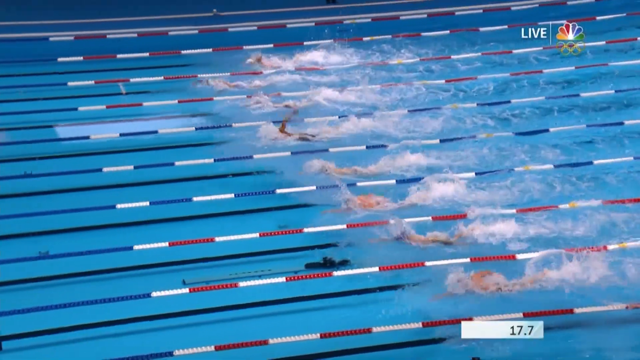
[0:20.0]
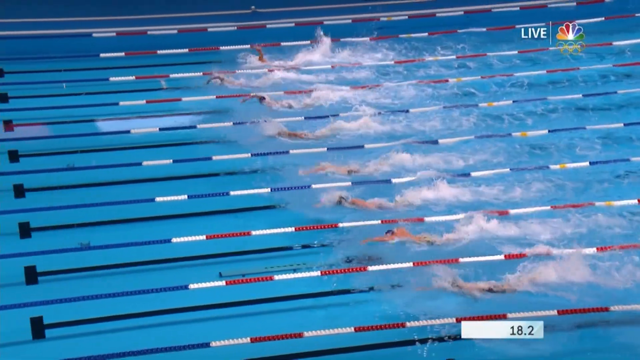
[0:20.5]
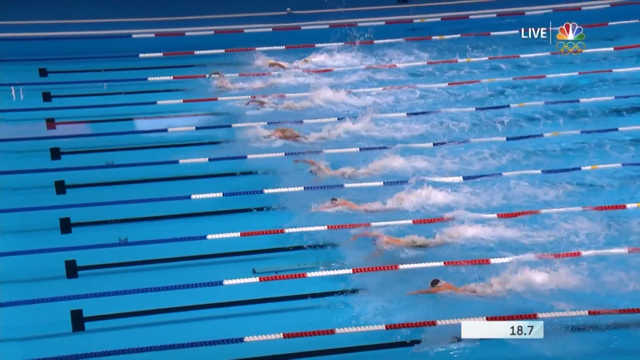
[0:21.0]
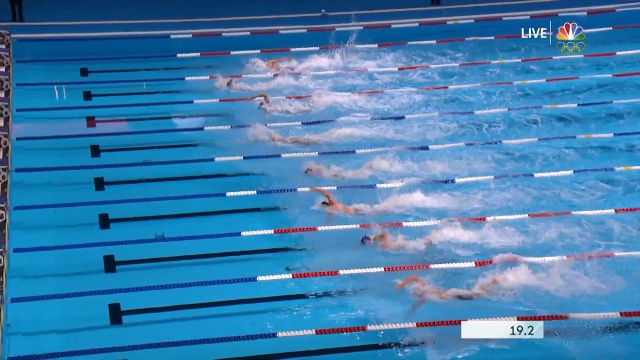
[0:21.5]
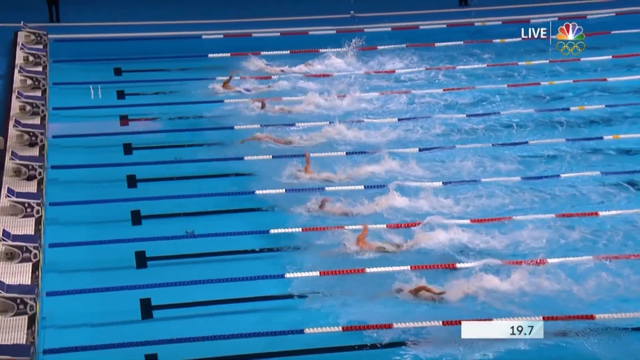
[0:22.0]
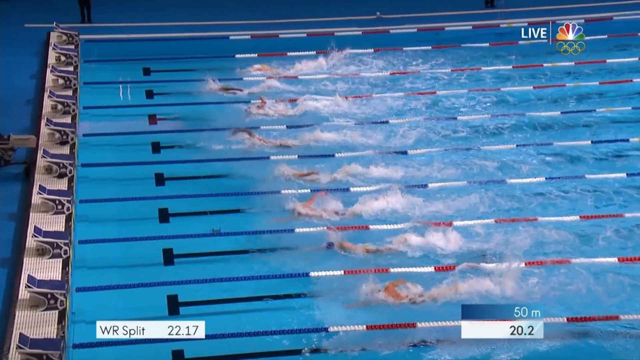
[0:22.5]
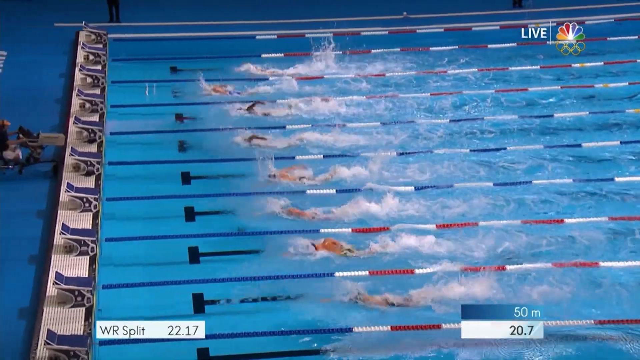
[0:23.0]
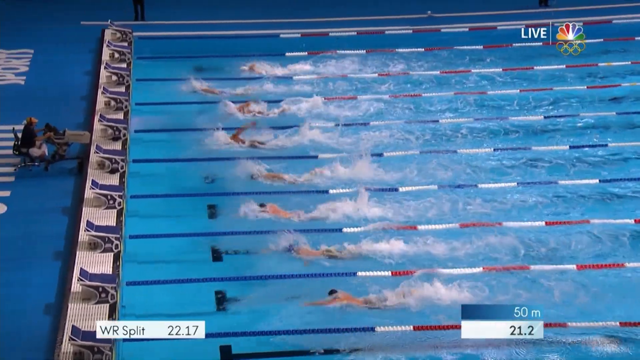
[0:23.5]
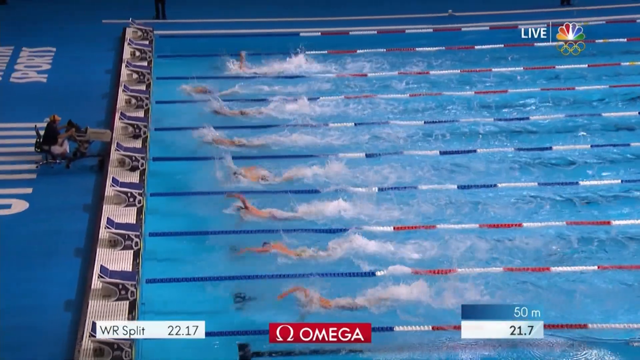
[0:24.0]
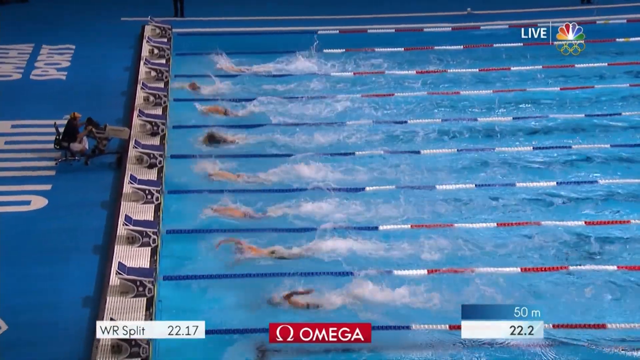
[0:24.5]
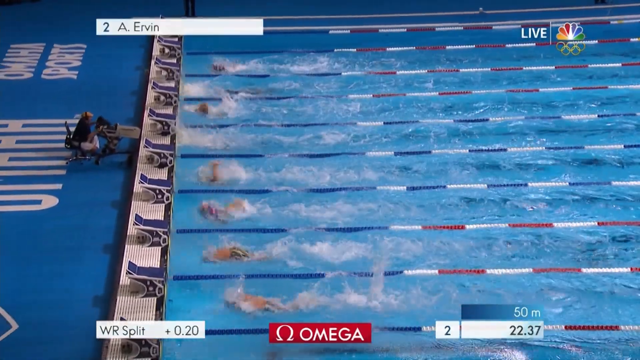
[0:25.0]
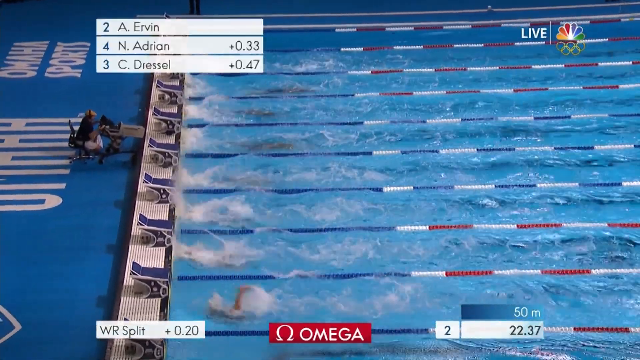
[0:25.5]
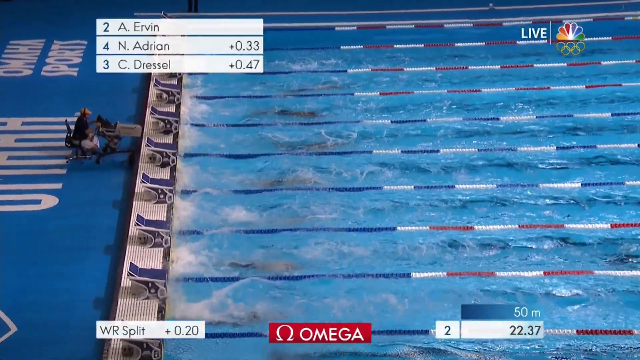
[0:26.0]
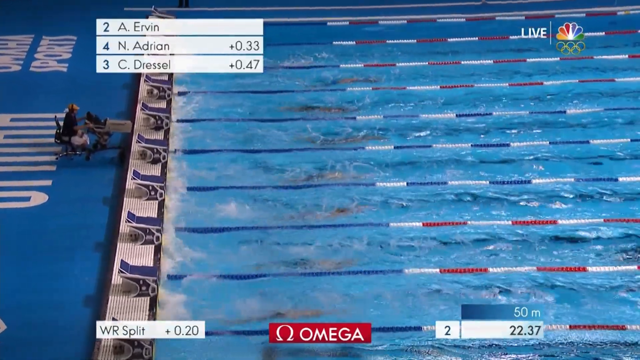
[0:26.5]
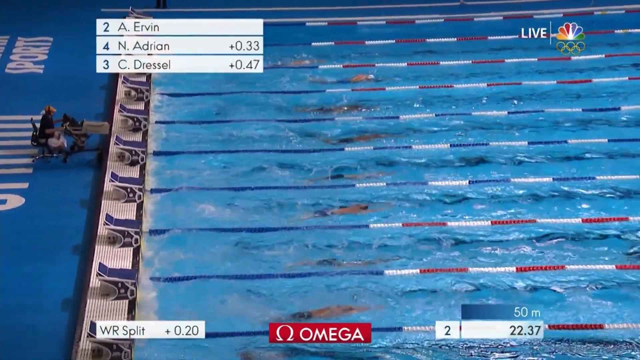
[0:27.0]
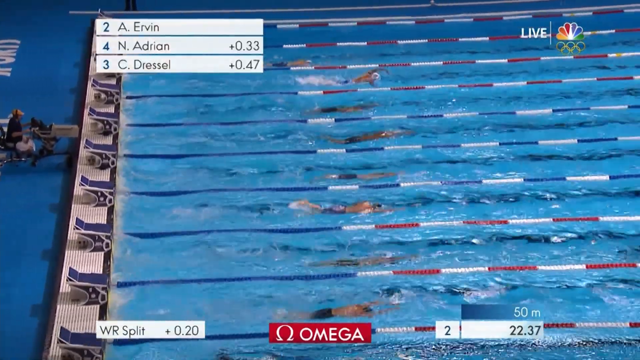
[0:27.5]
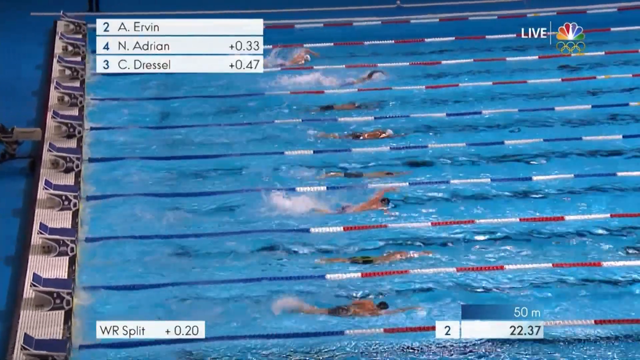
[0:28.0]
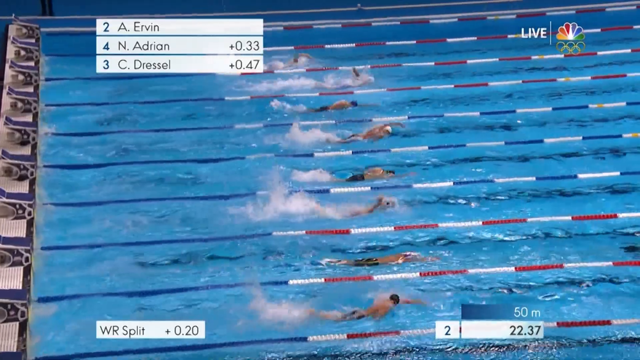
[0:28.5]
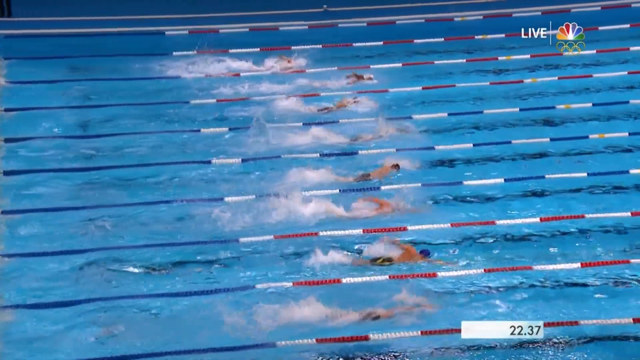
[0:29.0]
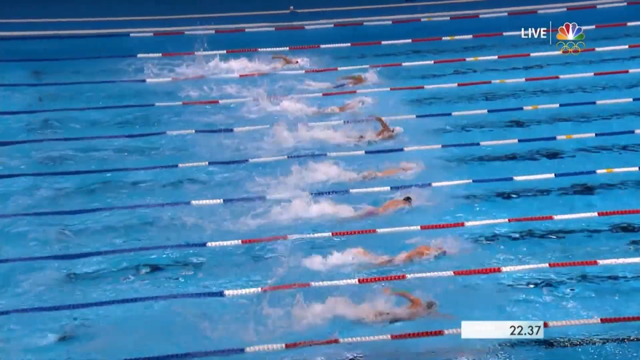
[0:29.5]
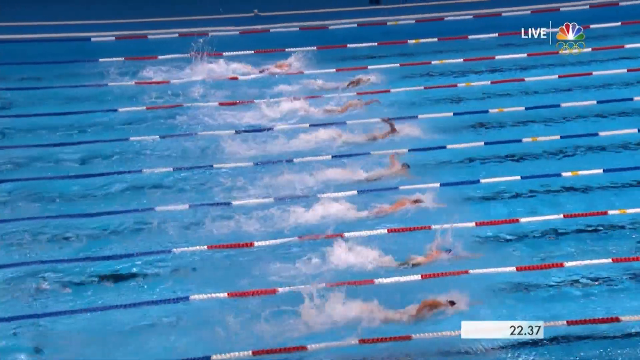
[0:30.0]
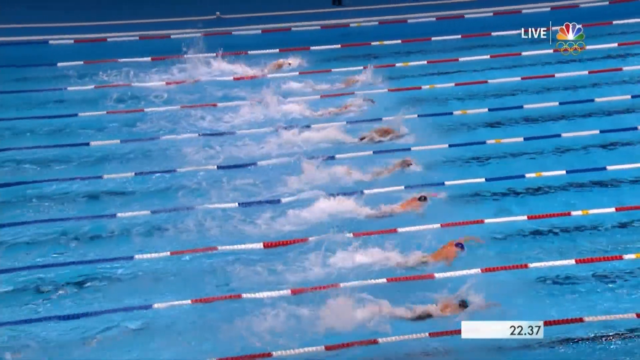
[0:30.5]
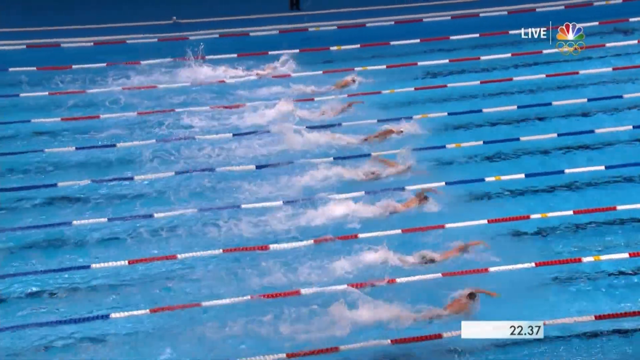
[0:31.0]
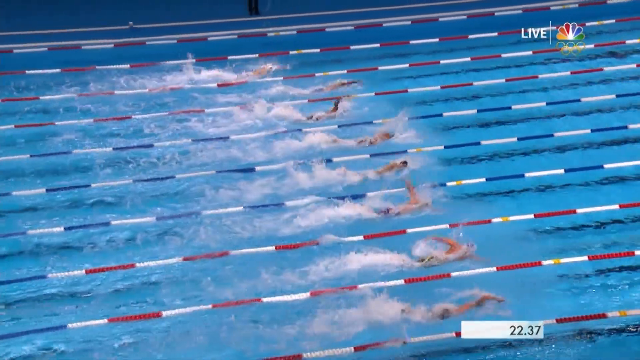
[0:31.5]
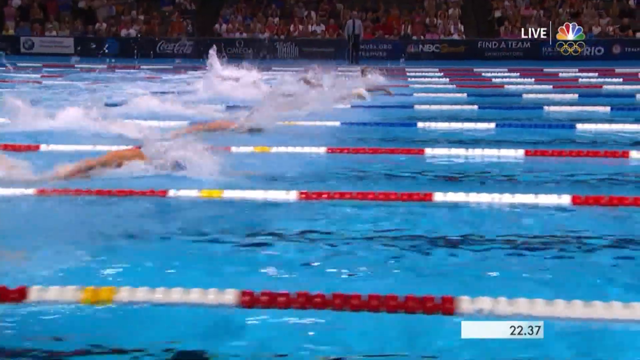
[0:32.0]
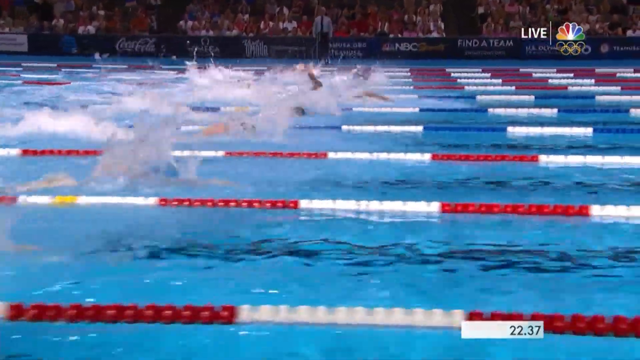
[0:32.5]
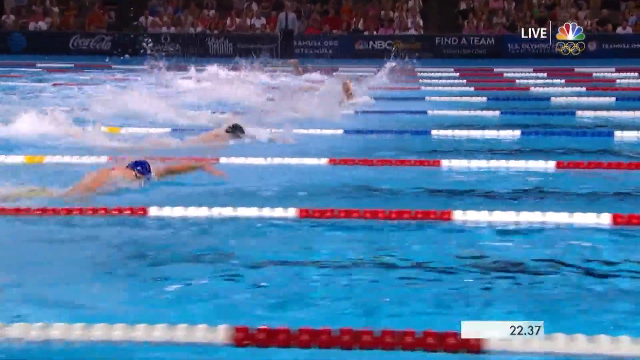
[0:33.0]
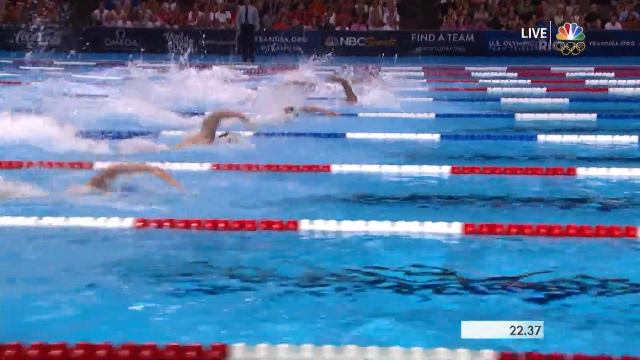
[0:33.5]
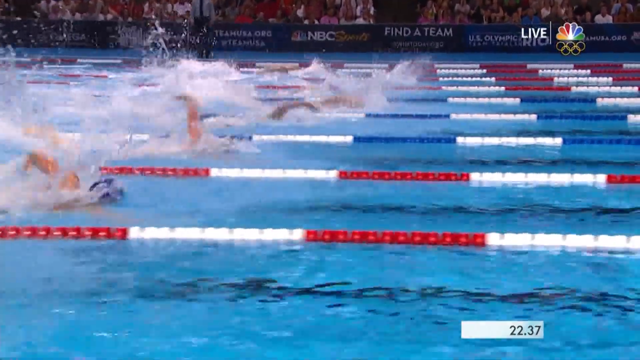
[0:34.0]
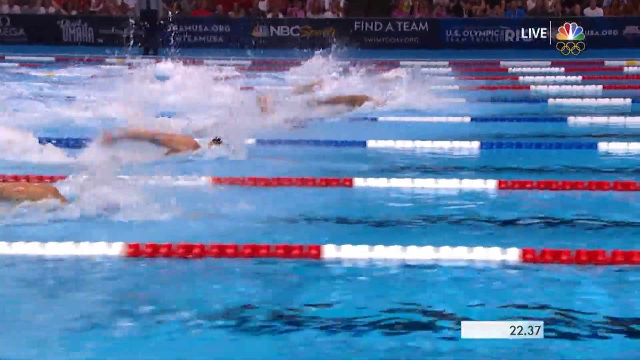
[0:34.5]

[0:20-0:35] The swimmers approach the other end of the pool, where what looks like some kind of set marks in blue appear for each lane. A cameraman sits in a chair, controlling a camera that views the swimmers from the front. In the lower left corner of the screen is written "WR split 22.17", meaning 22.17 seconds. The swimmers reach the end of the pool and all flip over to face the other direction, then continue swimming fast on their second lap, racing back to the other side.